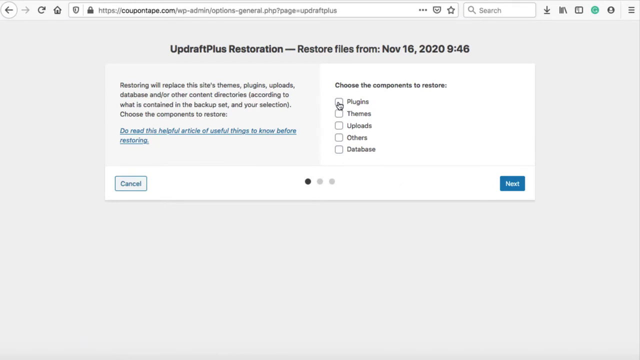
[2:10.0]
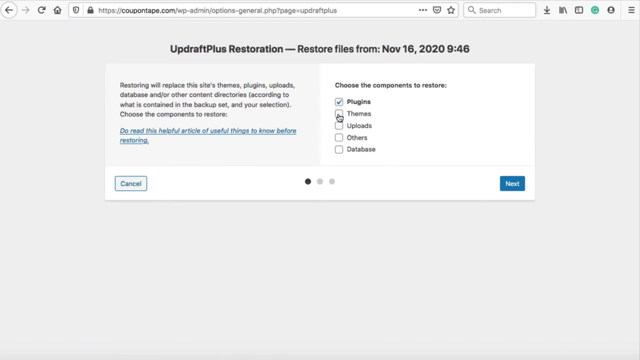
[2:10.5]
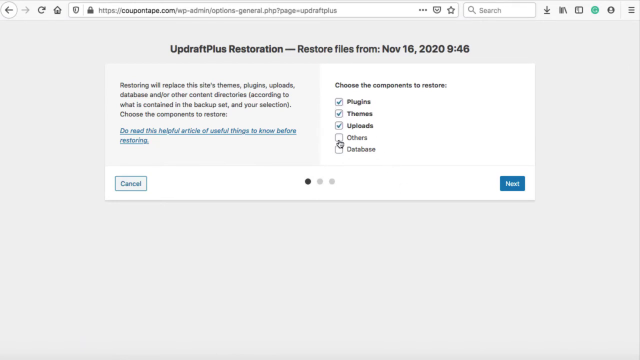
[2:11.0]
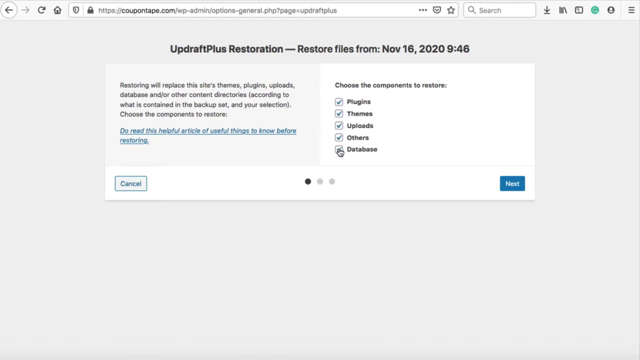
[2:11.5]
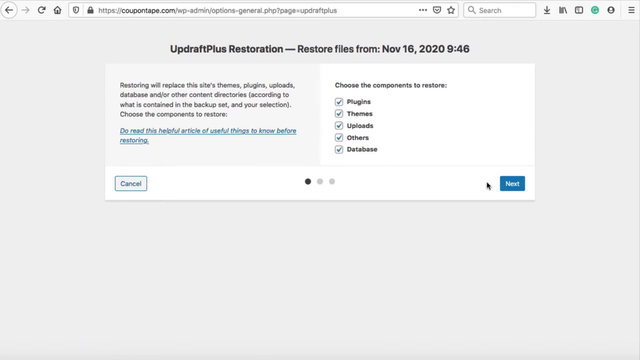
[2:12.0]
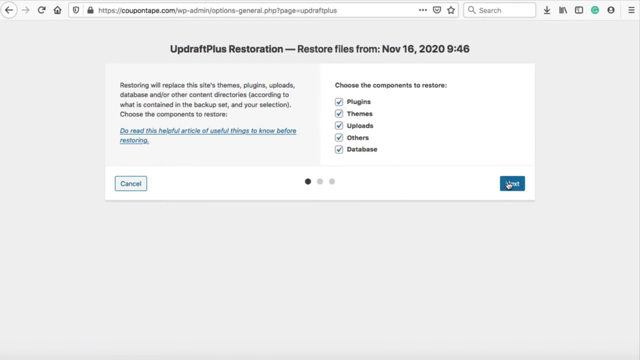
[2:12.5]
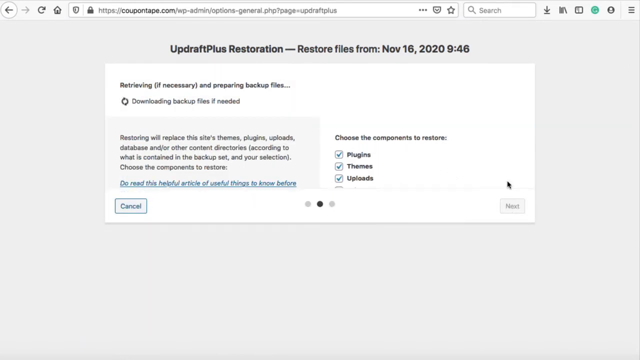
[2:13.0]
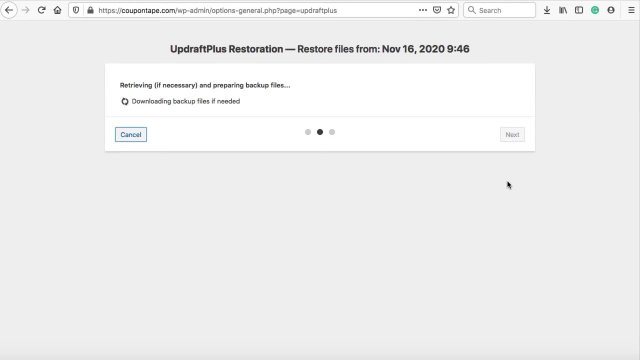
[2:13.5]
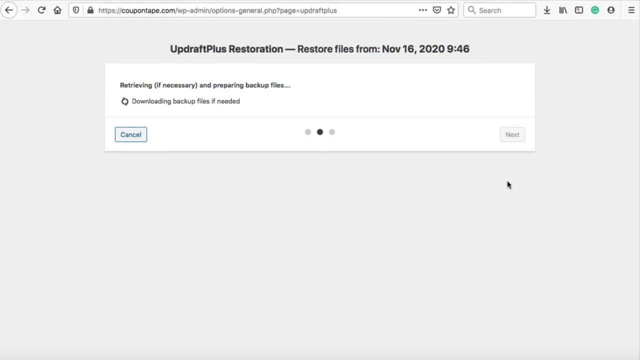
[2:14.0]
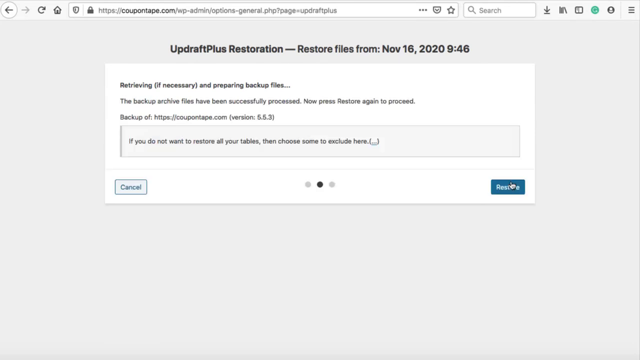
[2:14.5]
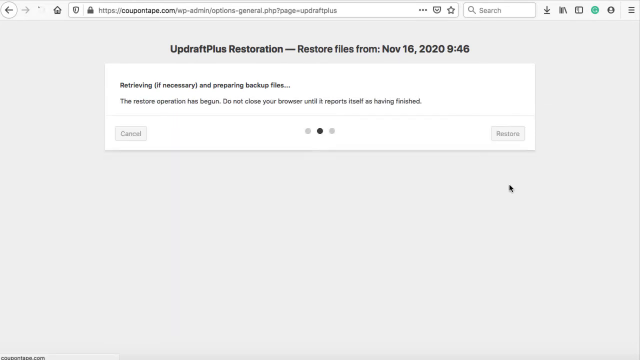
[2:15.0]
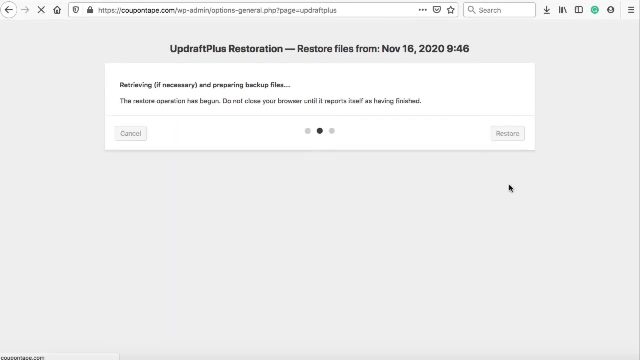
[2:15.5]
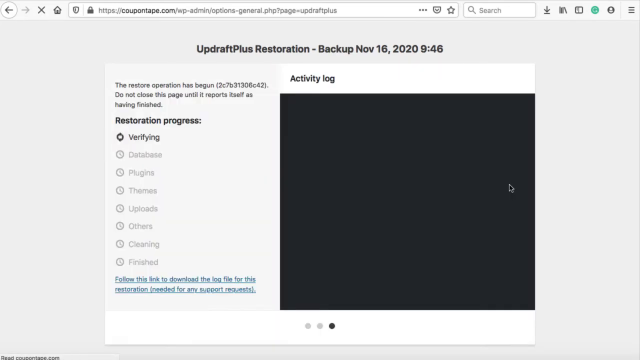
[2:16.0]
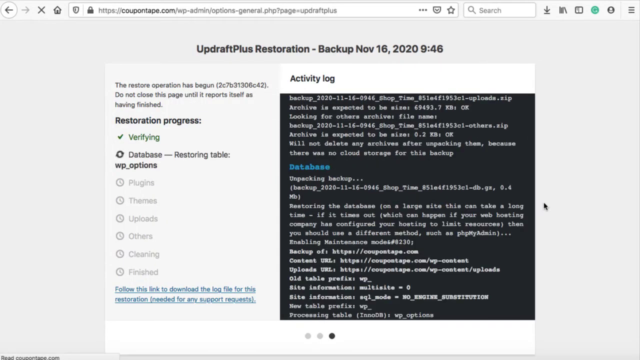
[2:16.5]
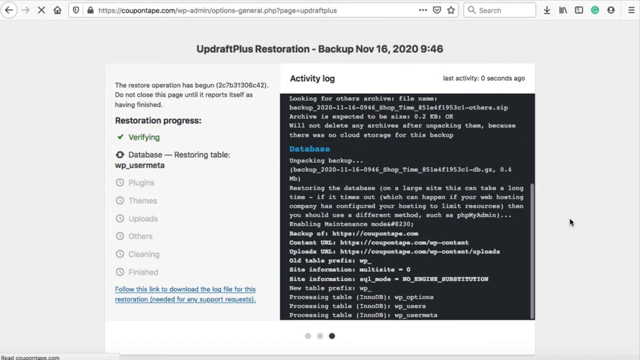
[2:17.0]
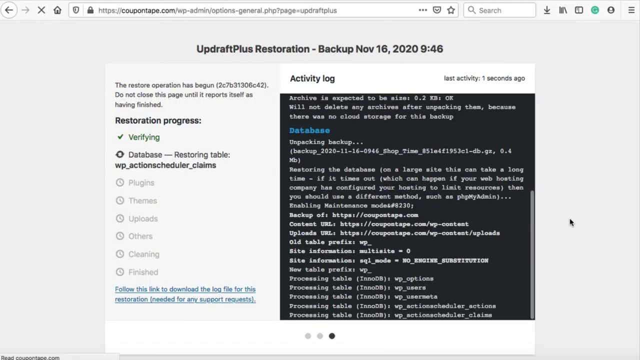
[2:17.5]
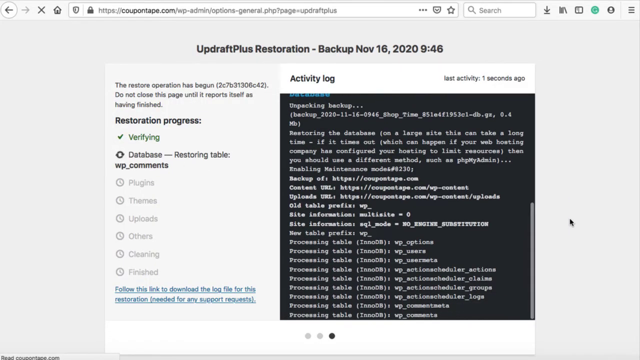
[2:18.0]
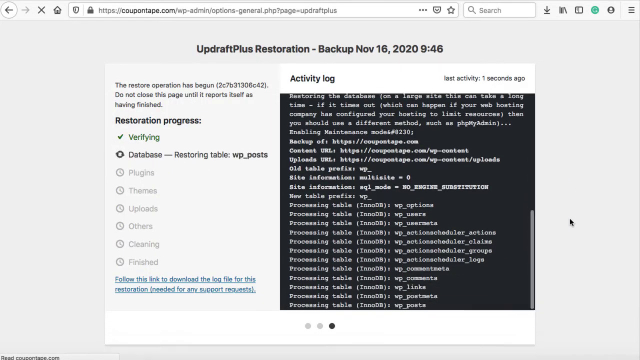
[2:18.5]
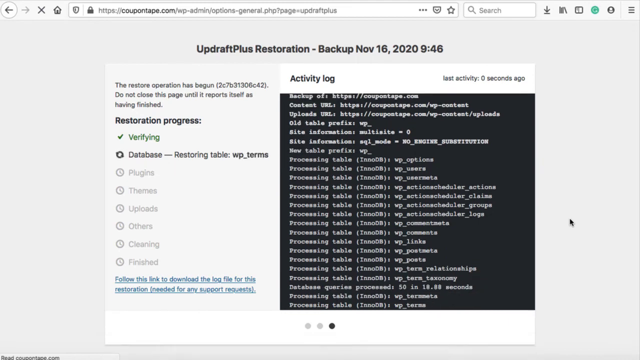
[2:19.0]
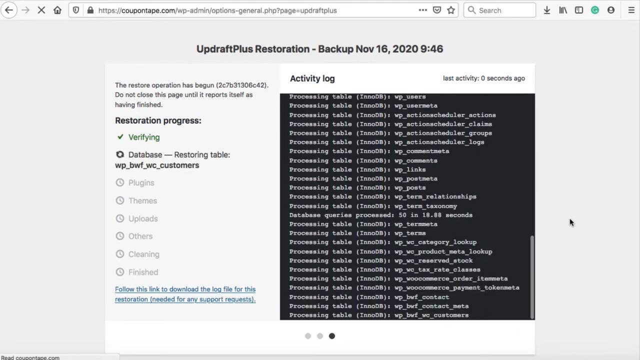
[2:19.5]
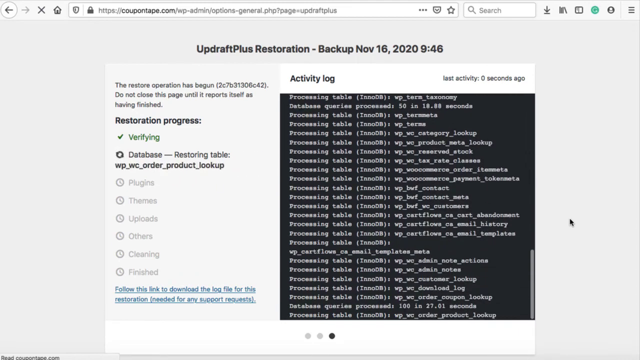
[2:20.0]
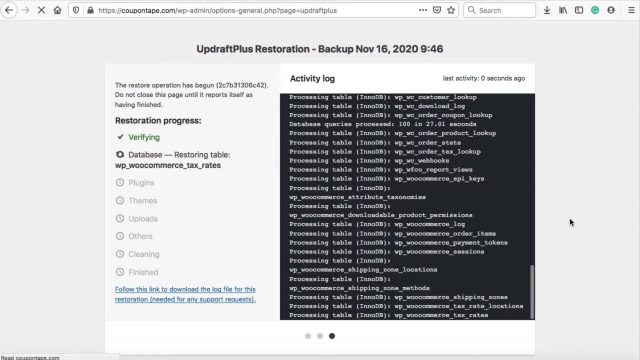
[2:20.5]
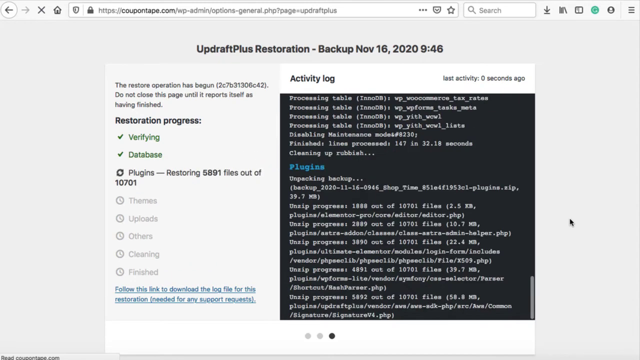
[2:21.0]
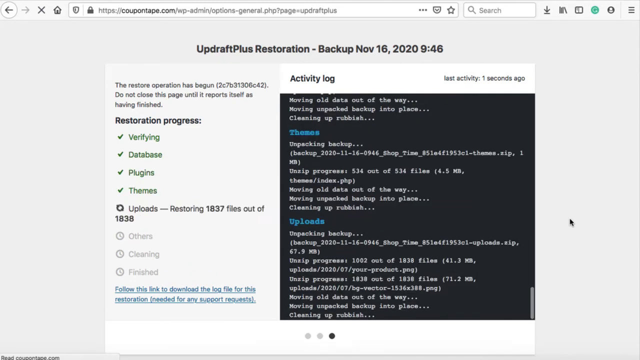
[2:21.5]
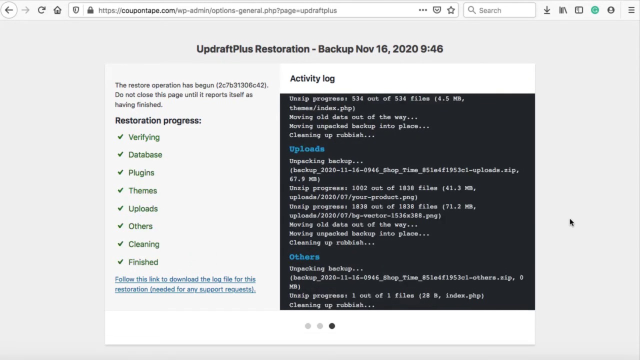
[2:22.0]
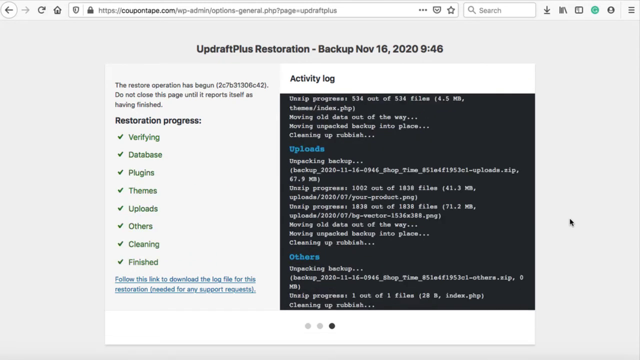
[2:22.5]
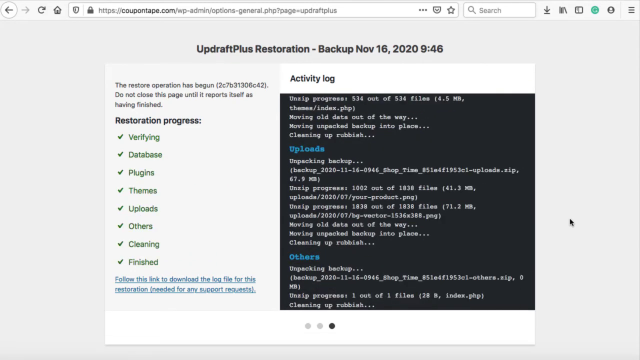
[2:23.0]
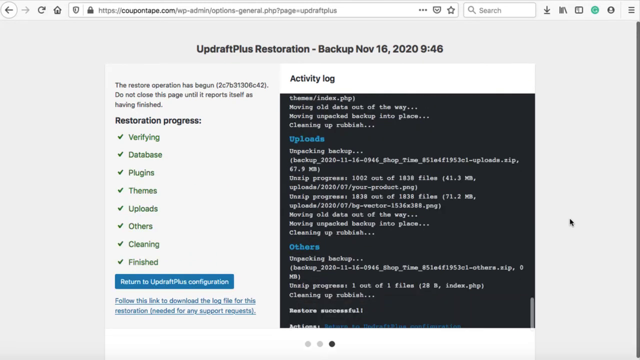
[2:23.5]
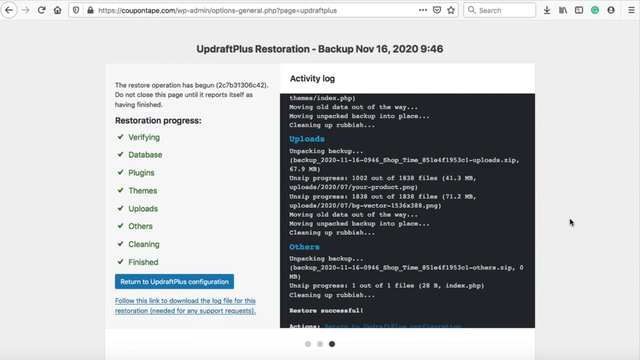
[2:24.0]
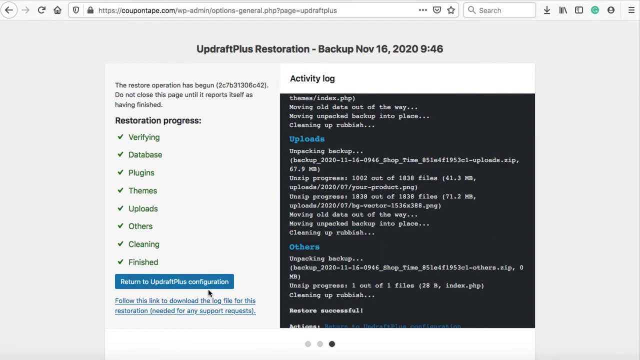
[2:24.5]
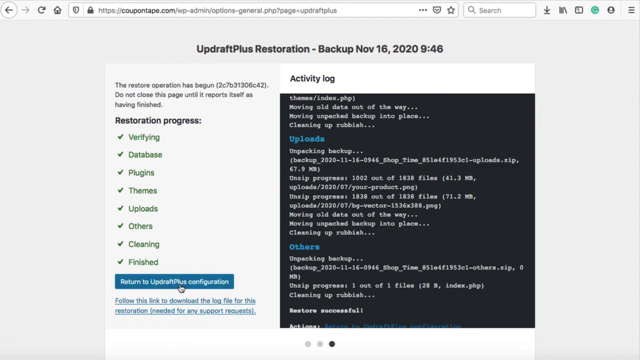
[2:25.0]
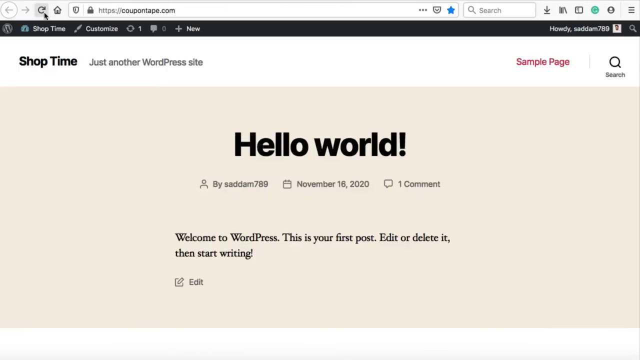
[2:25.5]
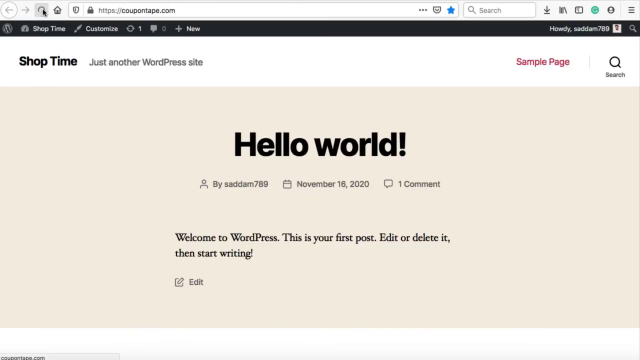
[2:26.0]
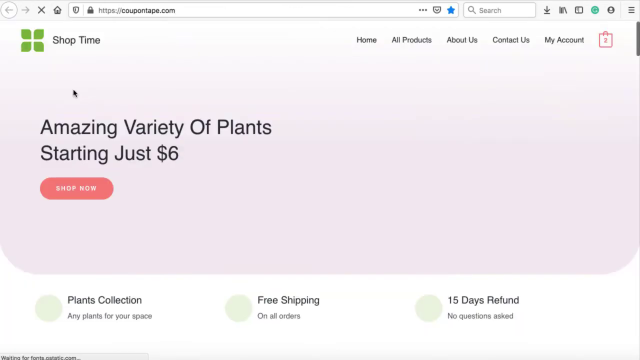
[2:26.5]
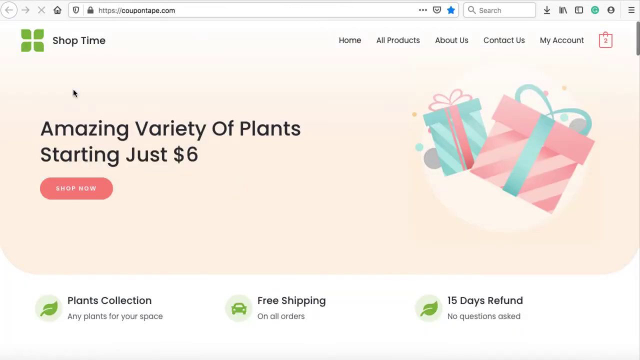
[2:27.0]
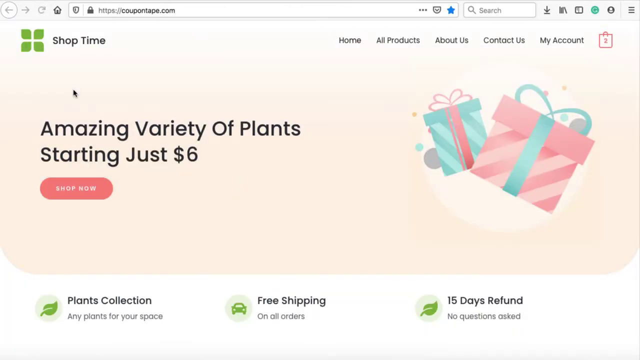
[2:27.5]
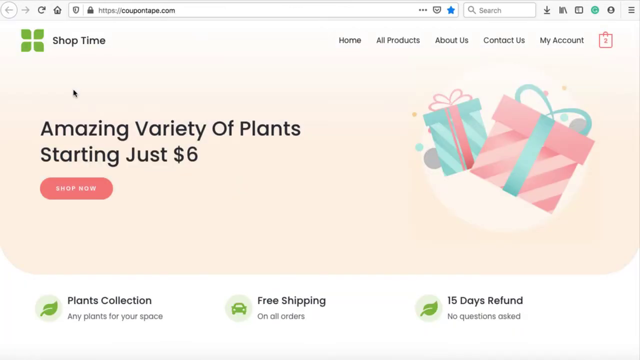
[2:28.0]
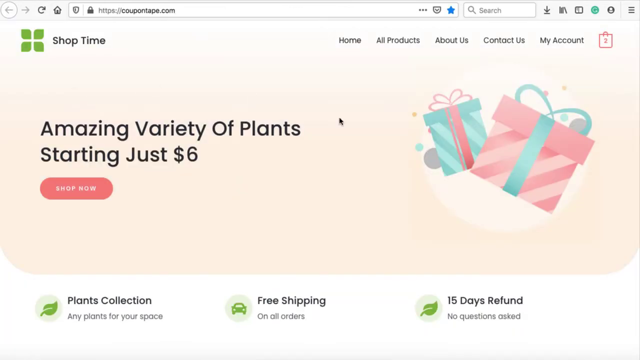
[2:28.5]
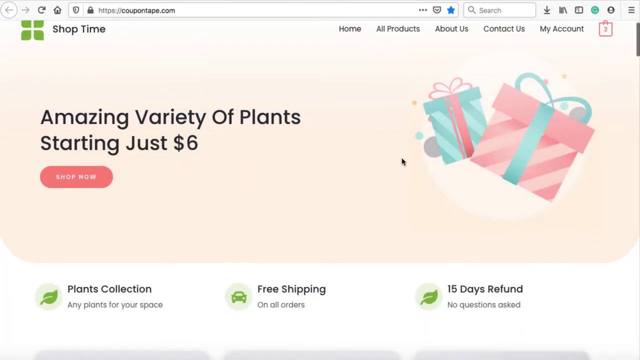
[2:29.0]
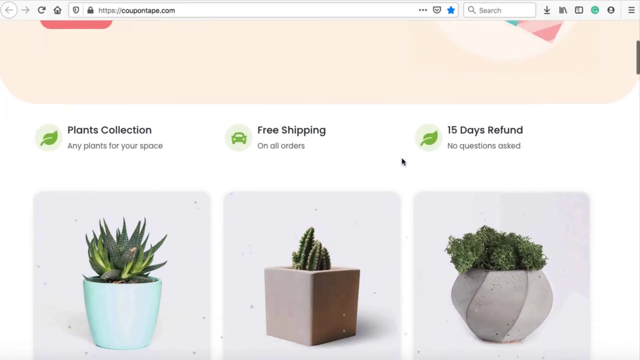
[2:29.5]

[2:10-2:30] A page for a website restoration has text at the top reading "Updraft Plus restoration restore files from November 16, 2020, 946." Below is a white rectangle with a description on the left and, on the right, "choose the components to restore" with checkboxes for plugins, themes, uploads, others, and database. The cursor checks all the boxes and clicks the next button. Text then reads "retrieving if necessary and preparing backup files" and "downloading backup files if needed," and downloading begins. An activity log scrolls through white code and white text. On the left, "restoration progress" shows the steps verifying, database, plugins, themes, uploads, others, cleaning, and finished; as each is done, its text turns green and a green check mark appears next to it. A blue button with white text appears saying "return to Updraft Plus configuration," and the person clicks it. The view then goes to the site's front page, which says "amazing variety of plants starting just six dollars" next to a digital illustration of a couple of gifts, and scrolls down to show pictures of cacti on the website.